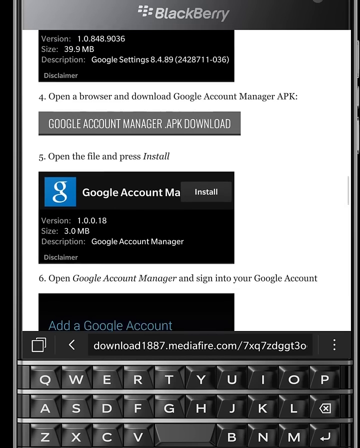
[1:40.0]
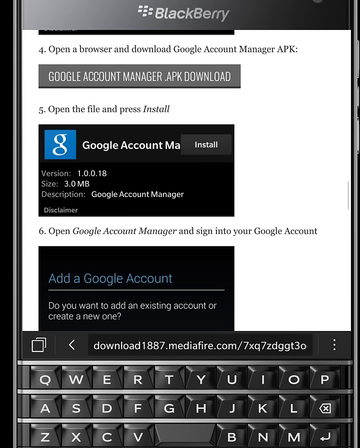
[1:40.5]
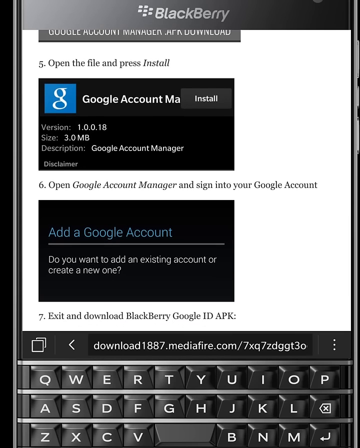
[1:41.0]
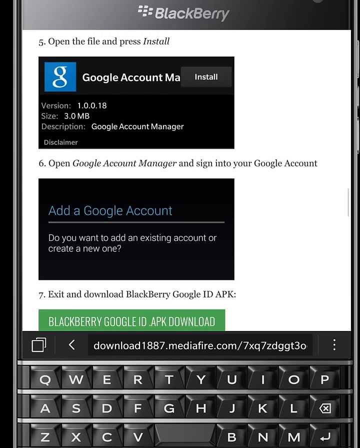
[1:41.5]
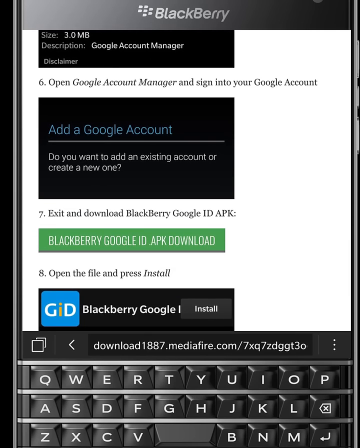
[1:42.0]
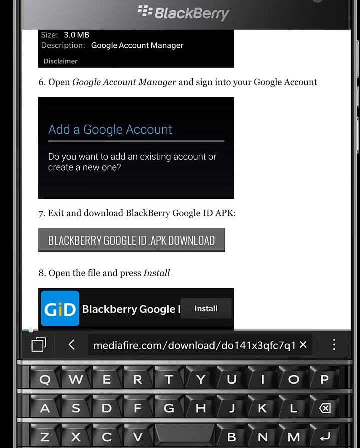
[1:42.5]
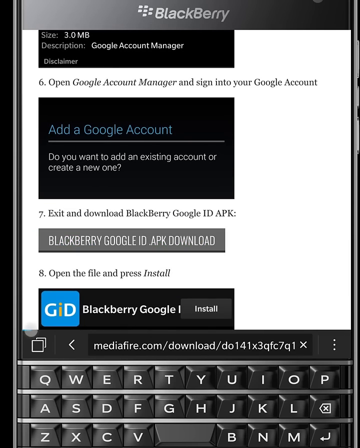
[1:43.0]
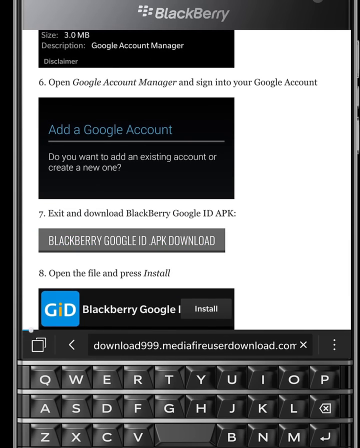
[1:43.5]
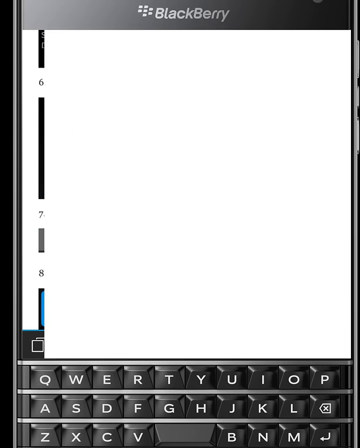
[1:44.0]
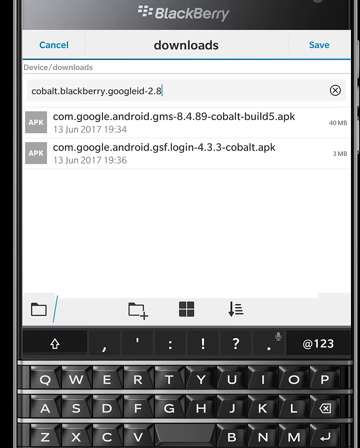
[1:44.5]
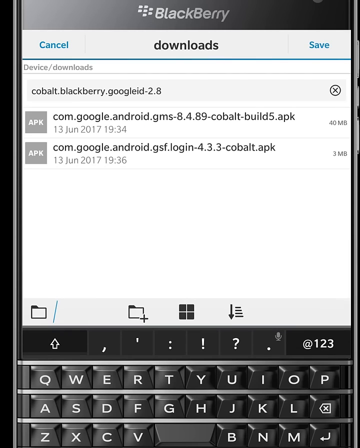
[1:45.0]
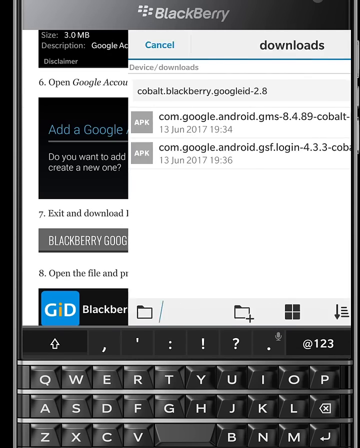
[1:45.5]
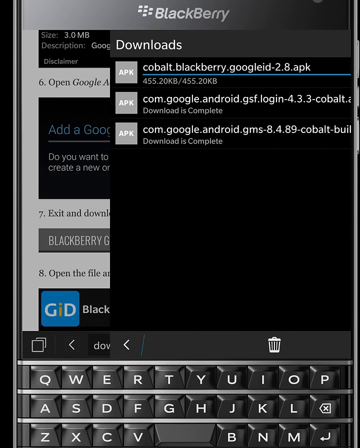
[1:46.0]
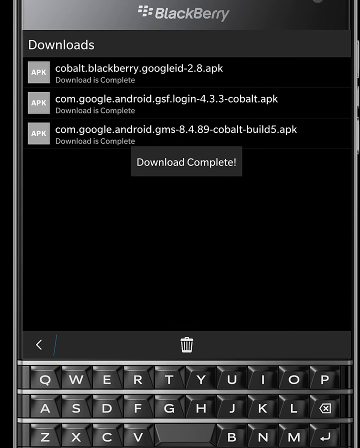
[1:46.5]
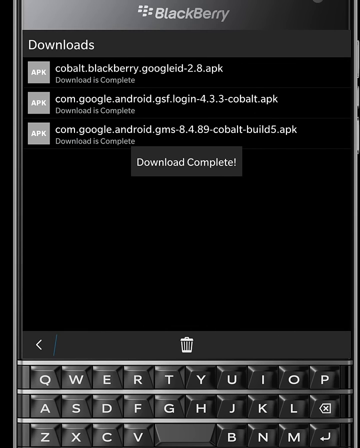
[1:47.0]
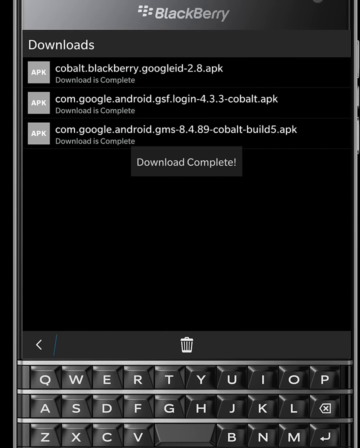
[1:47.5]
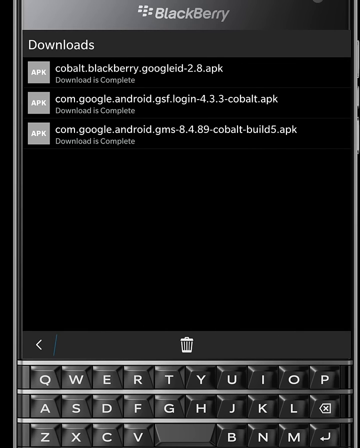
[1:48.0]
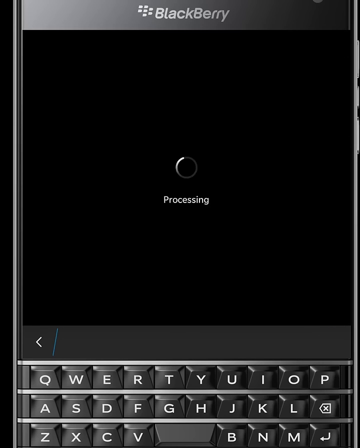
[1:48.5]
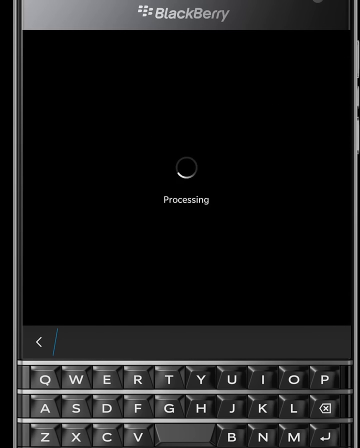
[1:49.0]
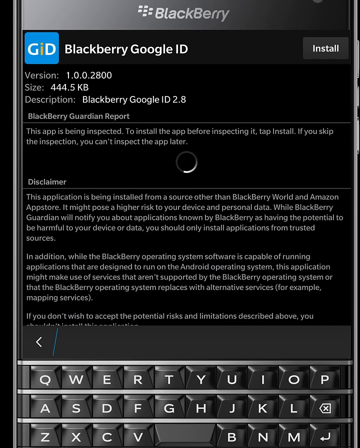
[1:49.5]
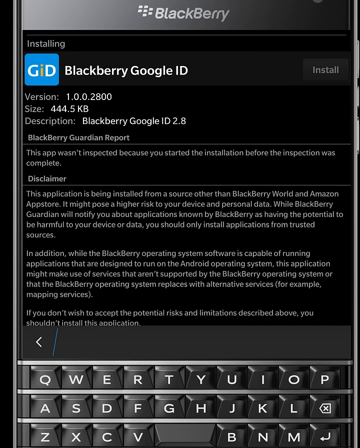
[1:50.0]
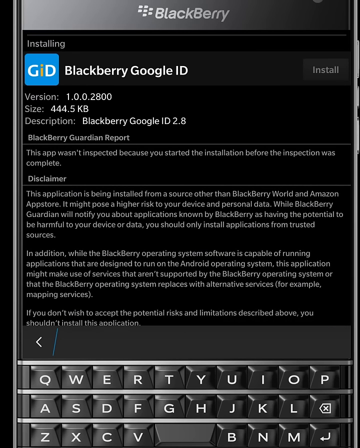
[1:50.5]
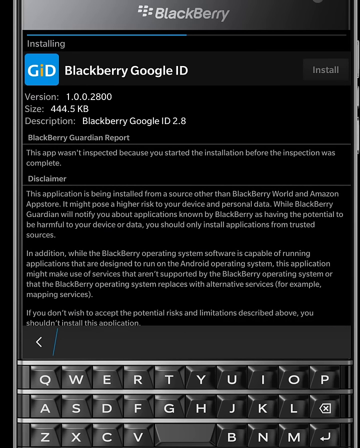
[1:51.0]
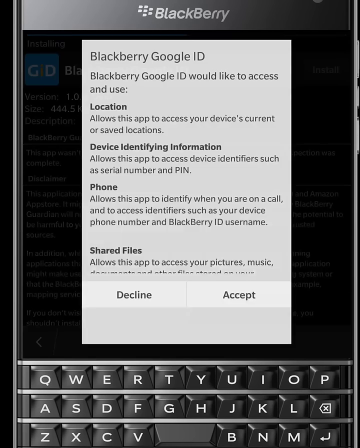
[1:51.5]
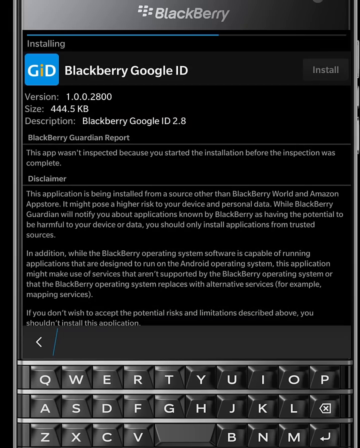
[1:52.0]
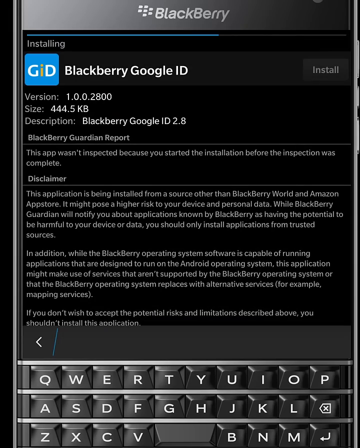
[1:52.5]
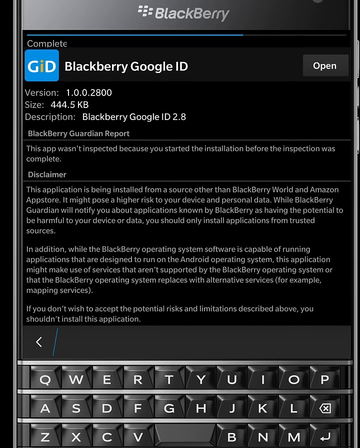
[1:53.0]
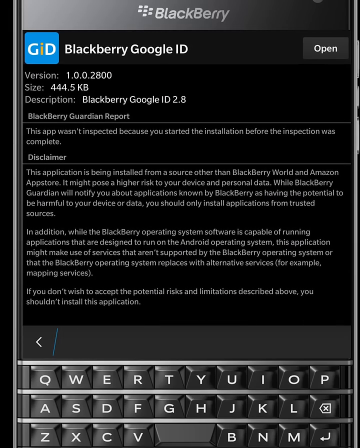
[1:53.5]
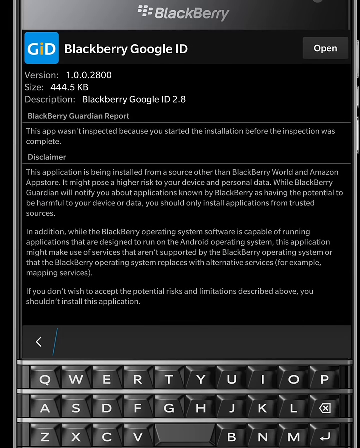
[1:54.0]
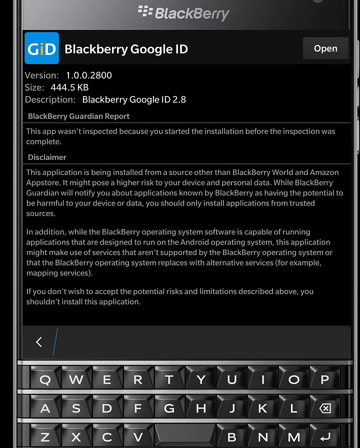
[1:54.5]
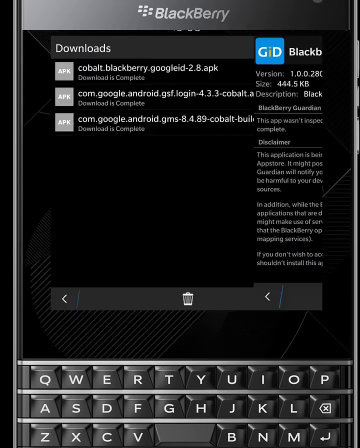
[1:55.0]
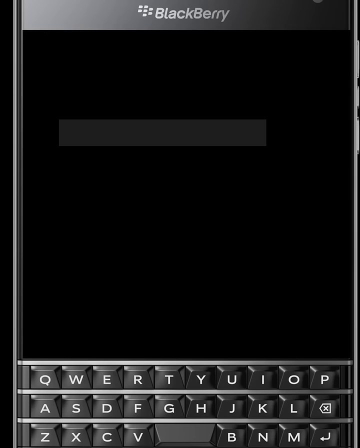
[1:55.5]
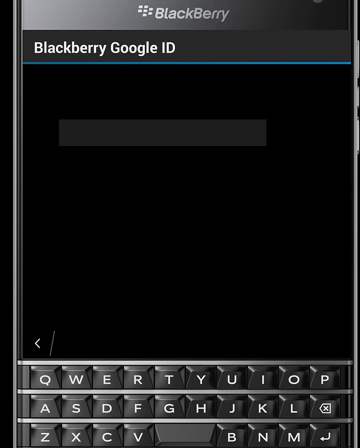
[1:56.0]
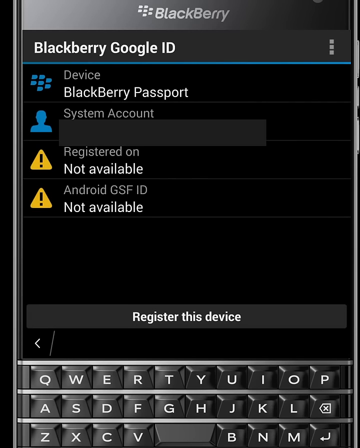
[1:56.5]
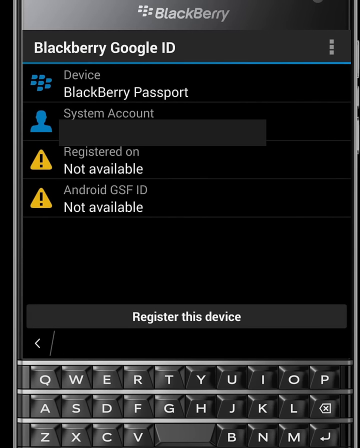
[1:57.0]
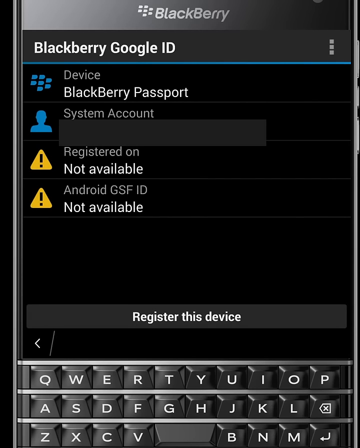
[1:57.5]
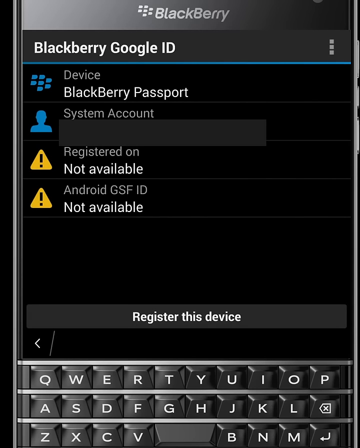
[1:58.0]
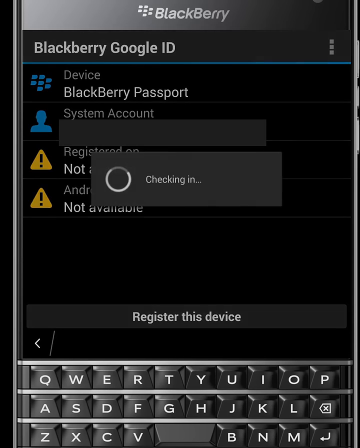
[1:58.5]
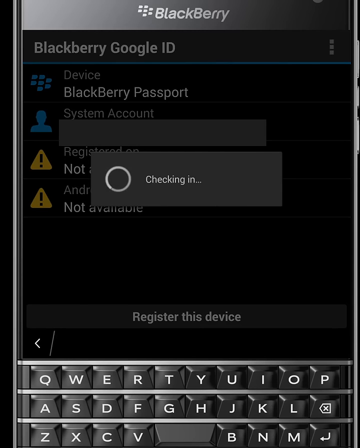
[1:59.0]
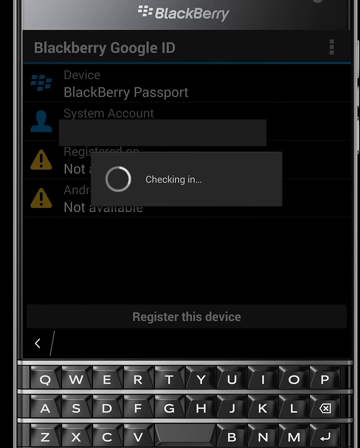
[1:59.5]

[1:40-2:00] The user appears to go to Google ID and continues downloading things, in a process that looks very similar to the earlier download. Something on the screen is blocked out, and there is an exclamation point. Something that looks like MediaFire appears. Everything is done on the phone itself. This is probably the fourth download from Google, as the user keeps cycling through the same steps. It looks like the device needs to be registered in some way.